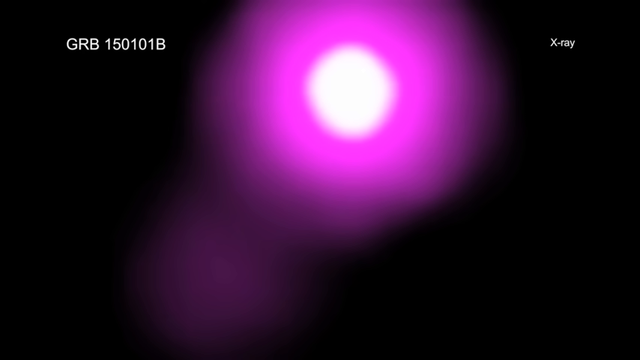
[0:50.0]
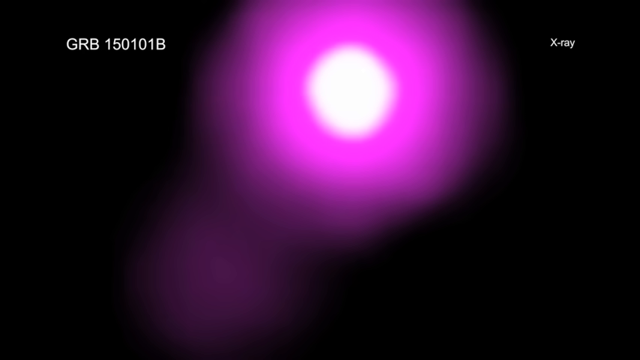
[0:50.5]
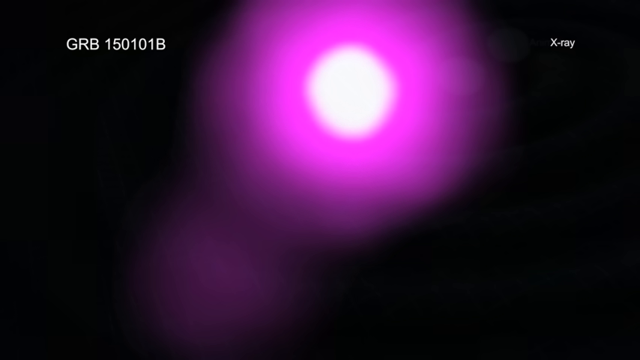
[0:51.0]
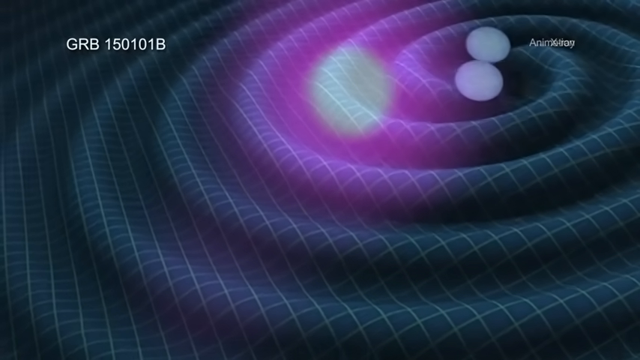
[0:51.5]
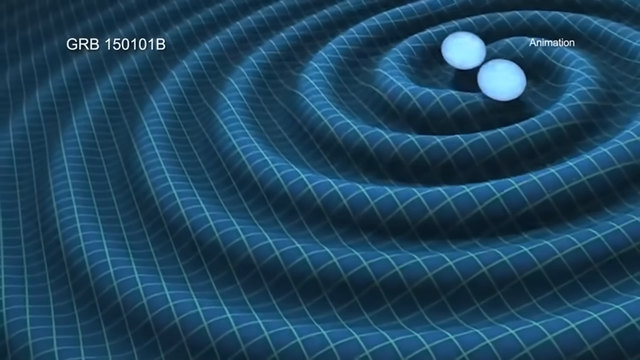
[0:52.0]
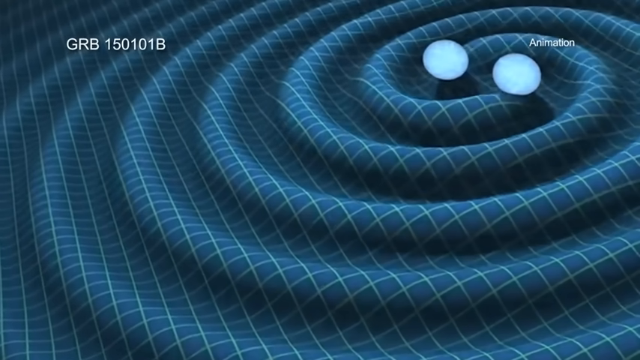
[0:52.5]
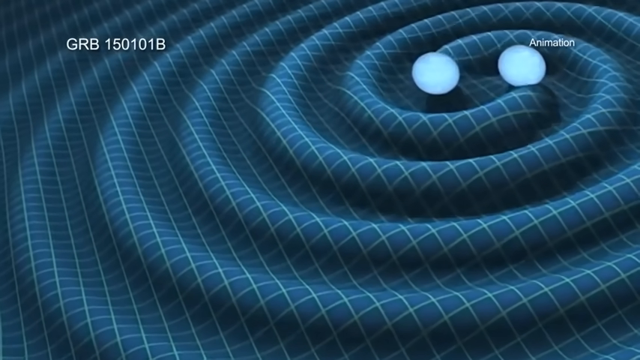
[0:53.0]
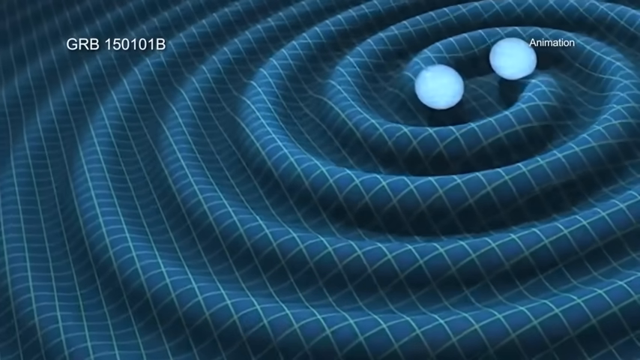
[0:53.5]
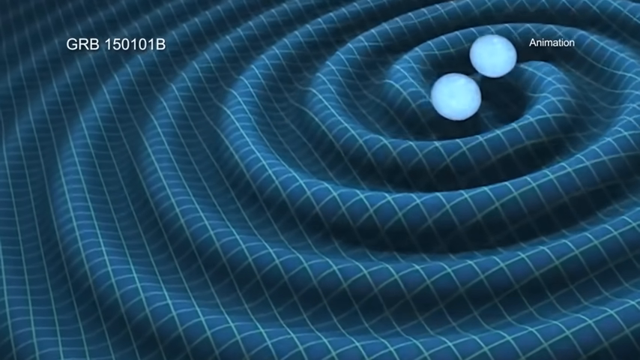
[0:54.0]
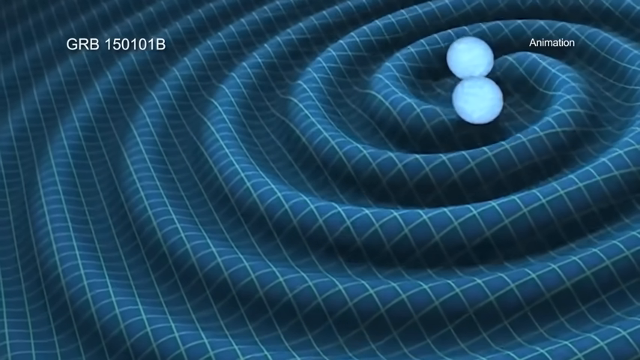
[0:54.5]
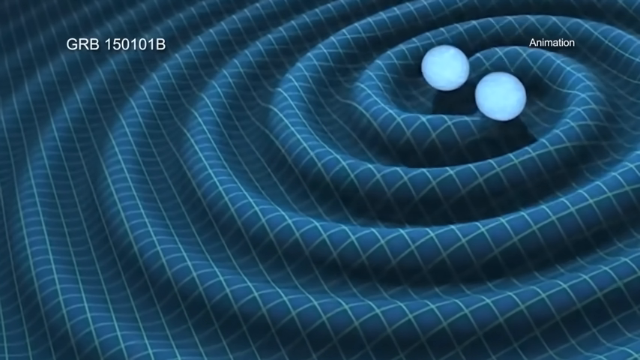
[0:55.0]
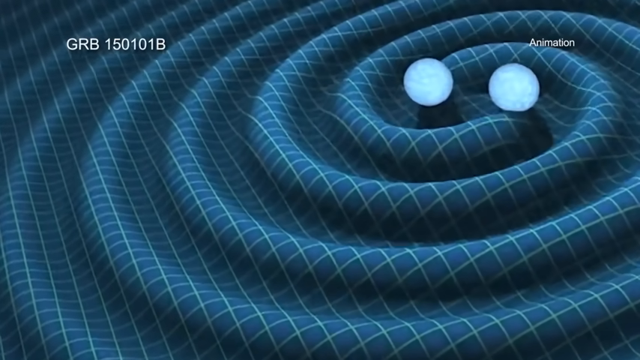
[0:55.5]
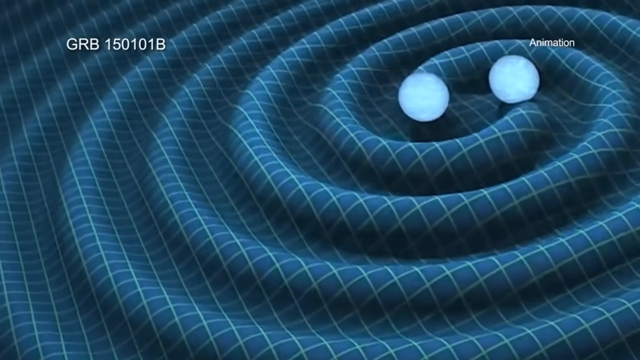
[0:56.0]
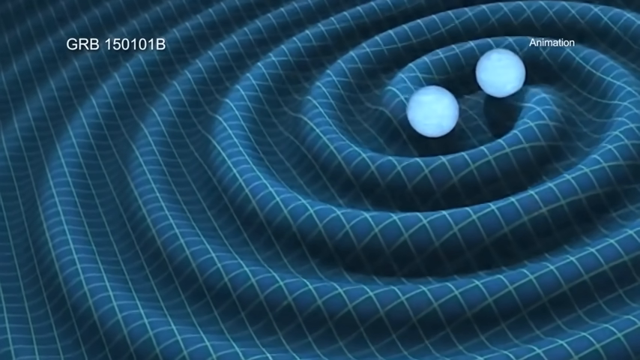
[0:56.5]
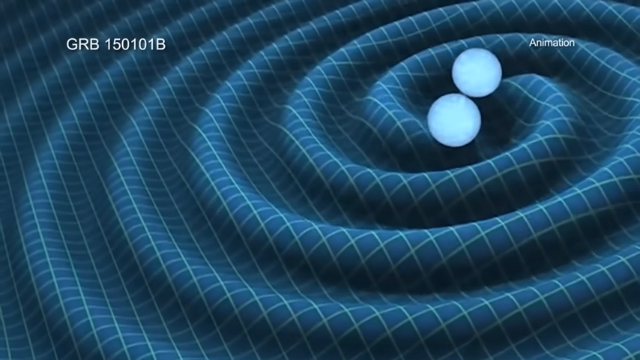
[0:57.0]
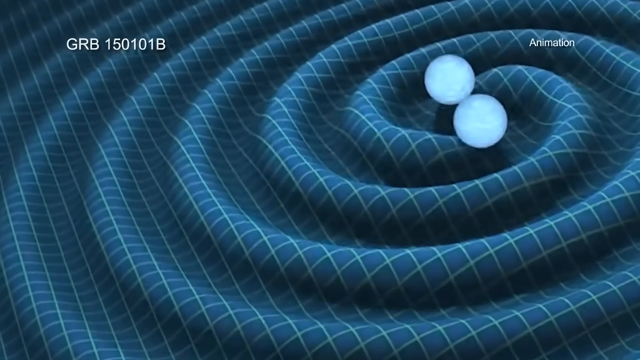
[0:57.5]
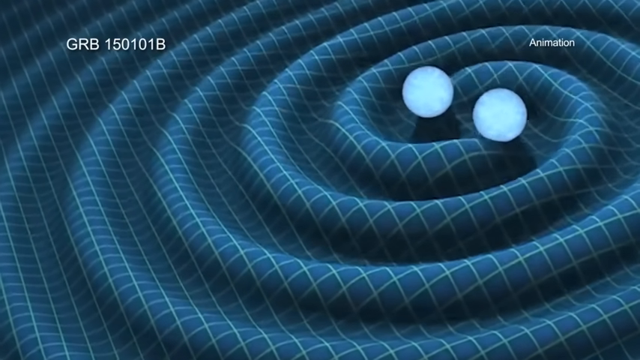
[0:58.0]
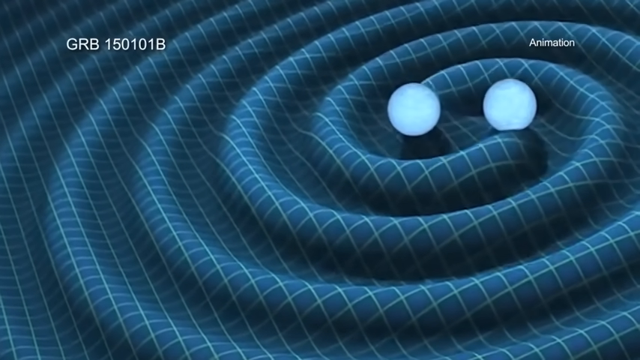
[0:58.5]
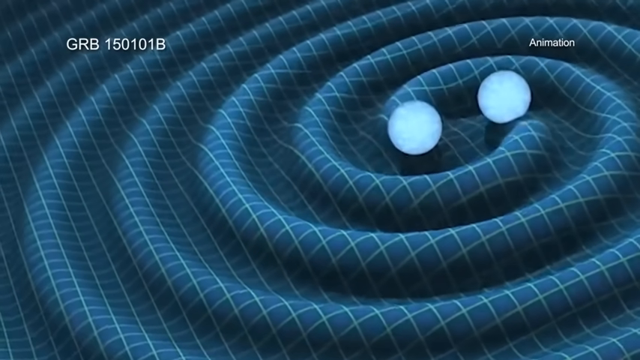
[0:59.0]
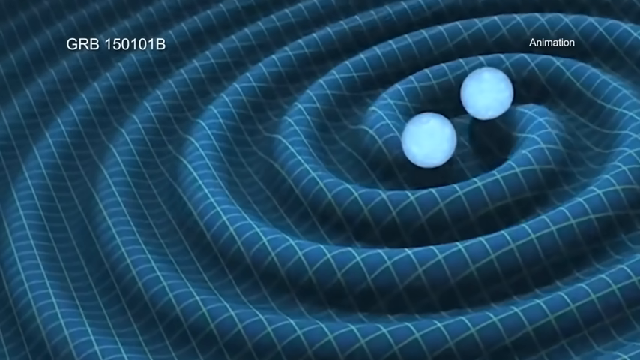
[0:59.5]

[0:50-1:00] A pink circular object appears with a label reading "x-ray", then the scene transitions to an animation labeled "GRB 150101B". Two circular objects rotate in a set, structured pattern, neither gaining nor losing space between them. Around their border, a grid-like structure shows different wave sets, apparently indicating that the two objects are outputting energy or some type of motion that causes waves to form. The grid lies over a blue background, with light grid patterns in a darker white shade.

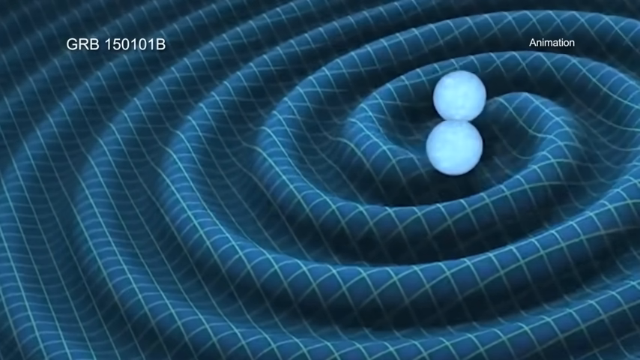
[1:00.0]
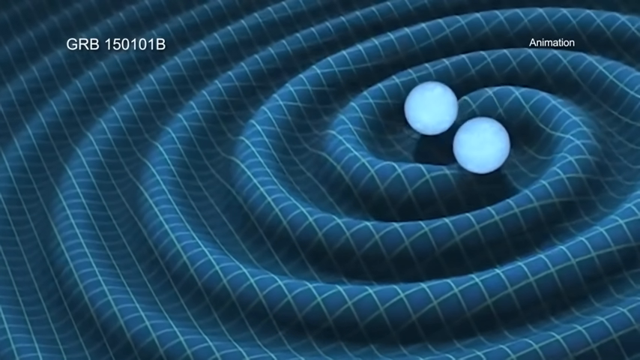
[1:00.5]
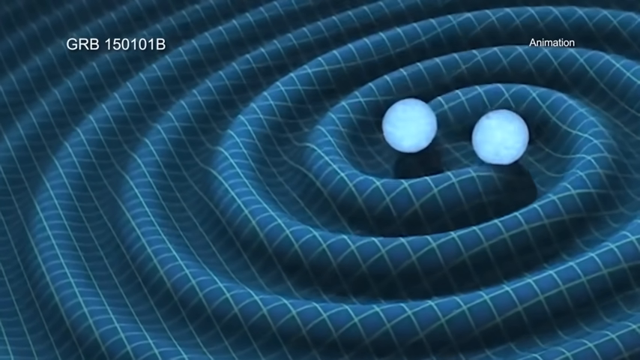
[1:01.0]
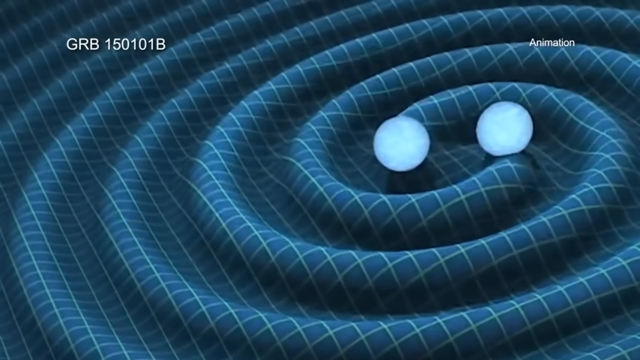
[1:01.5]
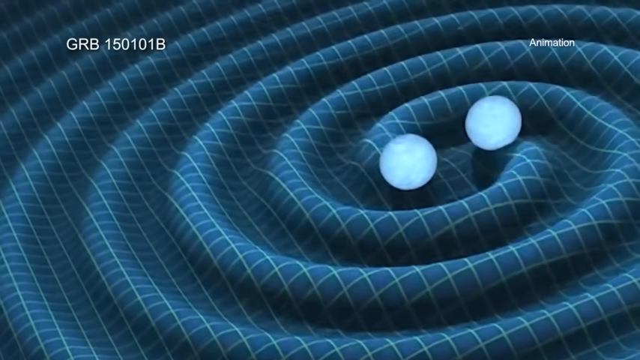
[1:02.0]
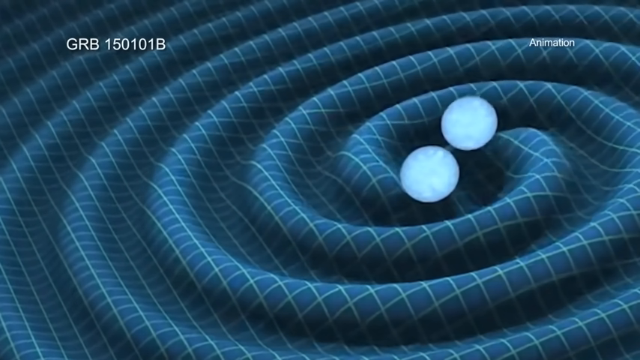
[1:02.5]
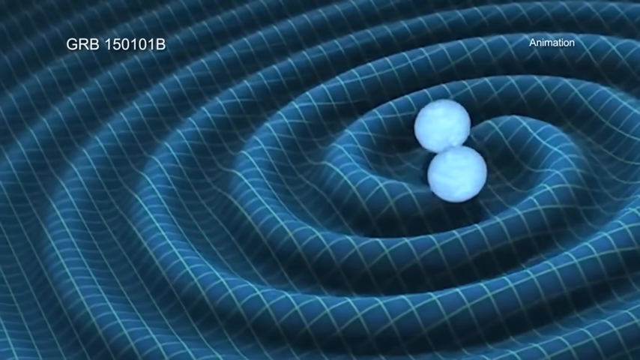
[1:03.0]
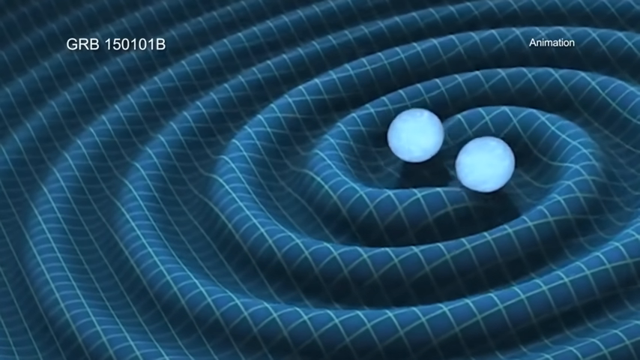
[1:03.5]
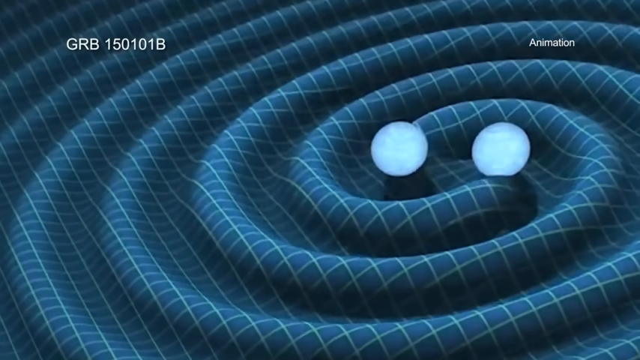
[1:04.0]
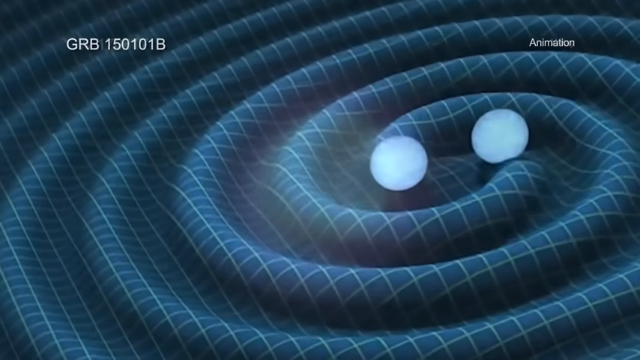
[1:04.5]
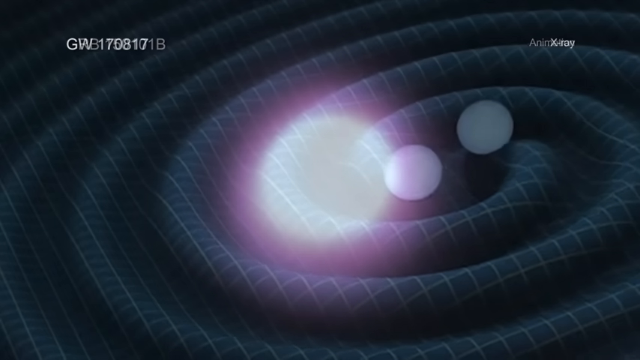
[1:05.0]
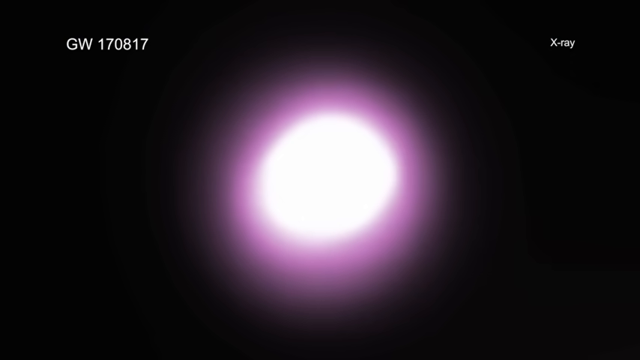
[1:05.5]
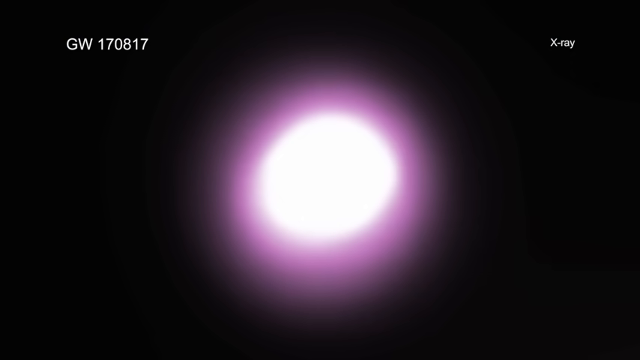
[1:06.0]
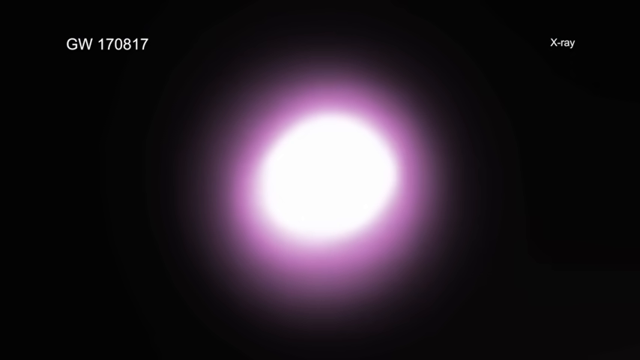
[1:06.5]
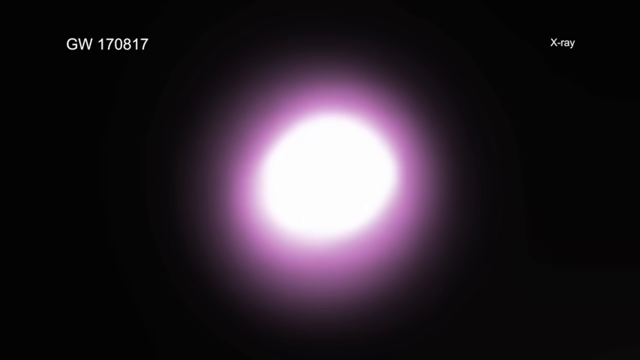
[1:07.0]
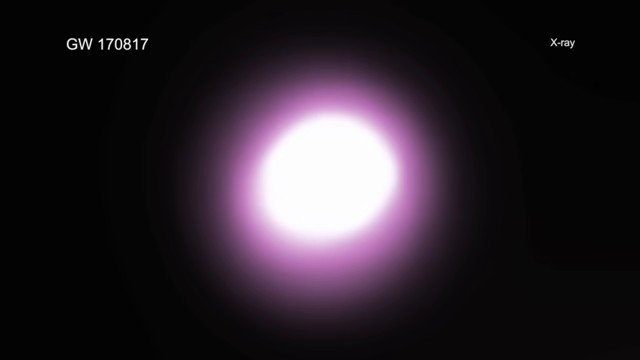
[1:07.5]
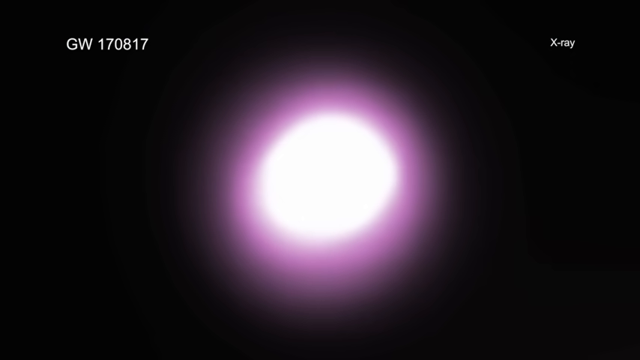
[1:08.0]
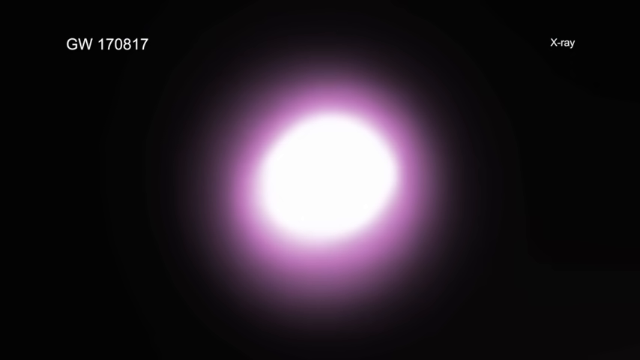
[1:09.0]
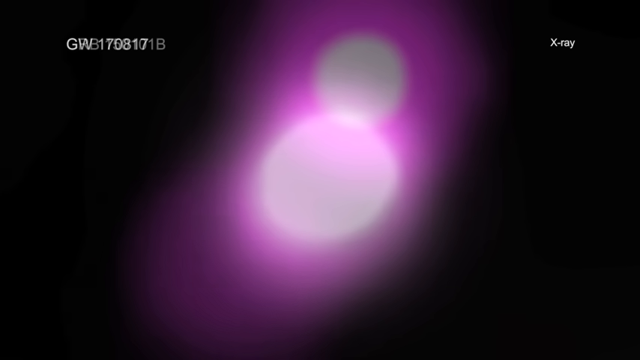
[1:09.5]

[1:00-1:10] An animation graphic, made with a CGI or Blender type of program, shows two glowing blue orbs rotating and orbiting around each other over a grid-like background. The orbs output energy that is visible on the grid, and the energy grows as the animation progresses. Toward the end, a large pink and white ball appears on a black background, with a label at the top right reading "X-Ray" and a label at the top left reading "GW 170817".